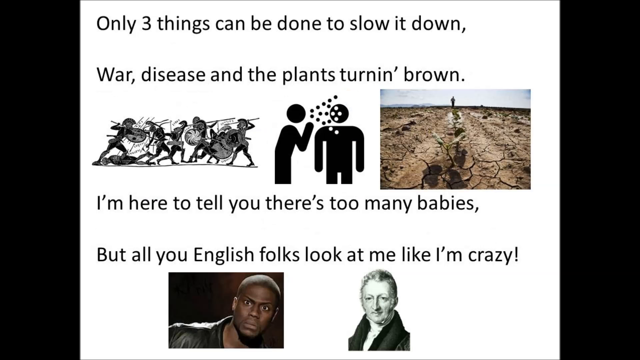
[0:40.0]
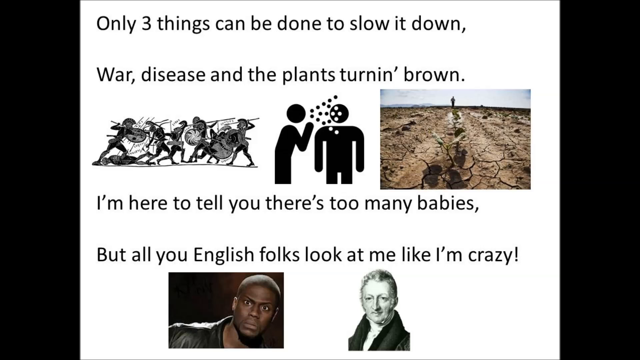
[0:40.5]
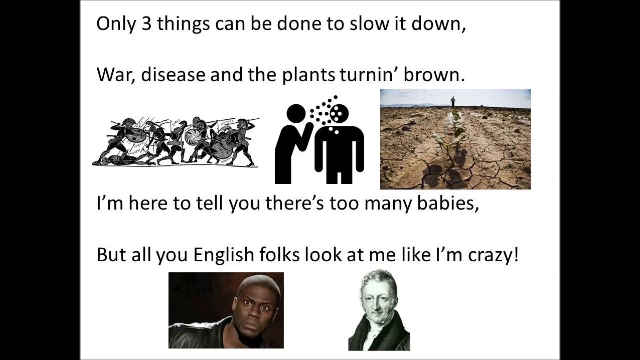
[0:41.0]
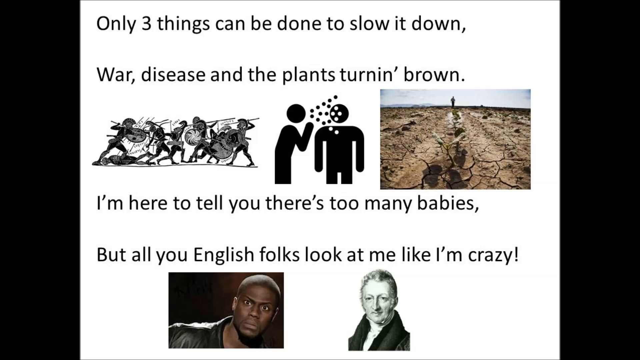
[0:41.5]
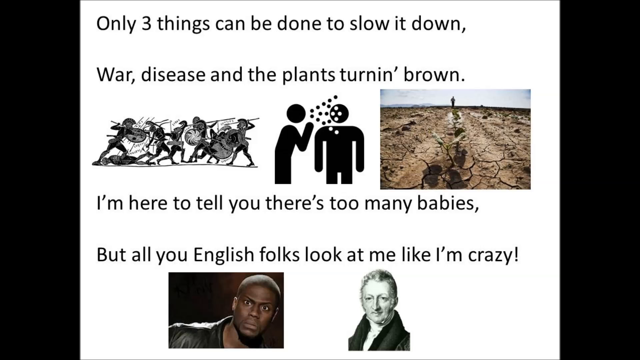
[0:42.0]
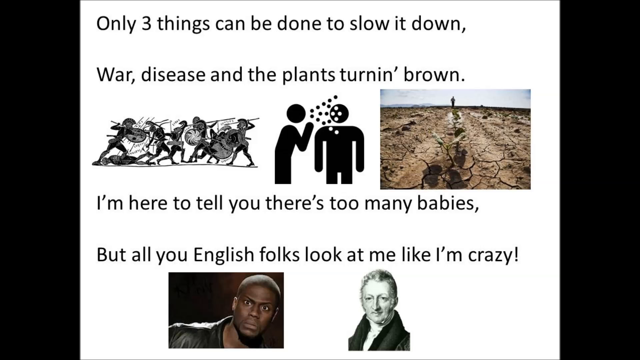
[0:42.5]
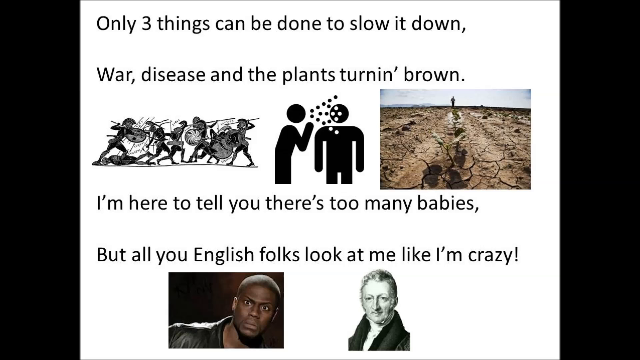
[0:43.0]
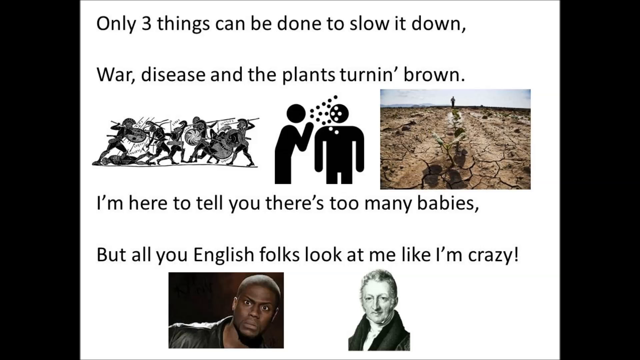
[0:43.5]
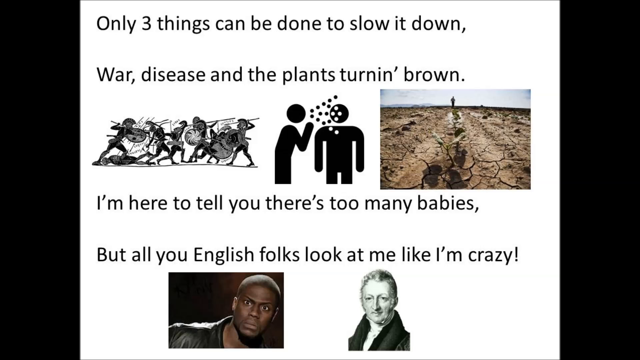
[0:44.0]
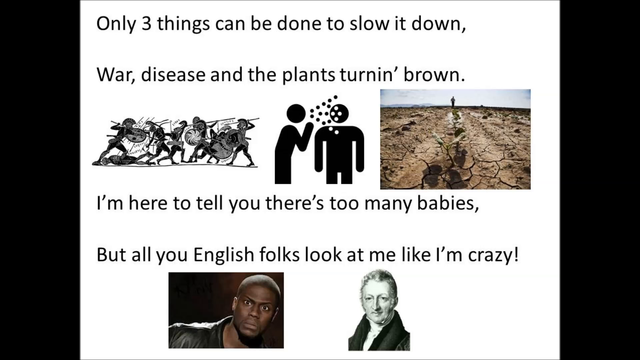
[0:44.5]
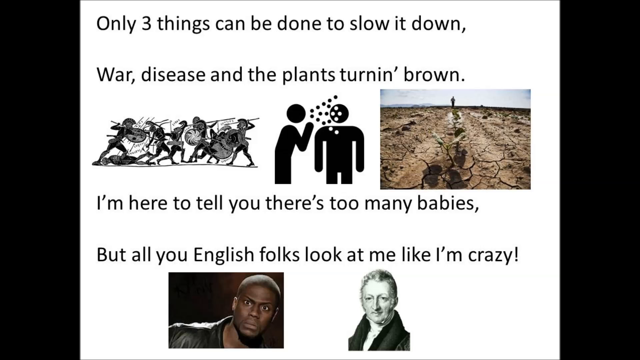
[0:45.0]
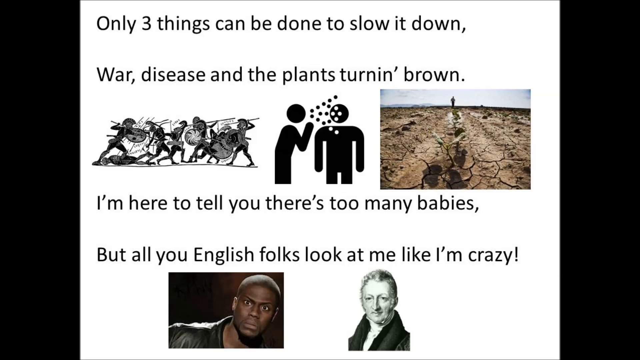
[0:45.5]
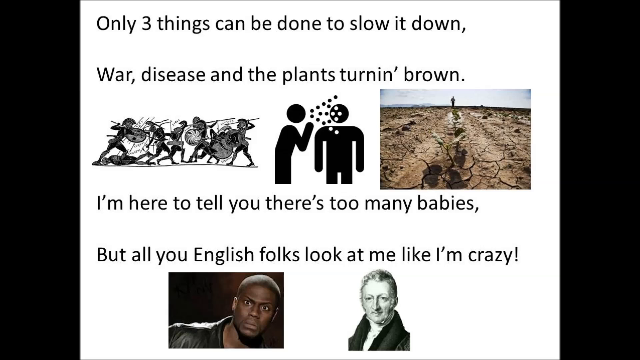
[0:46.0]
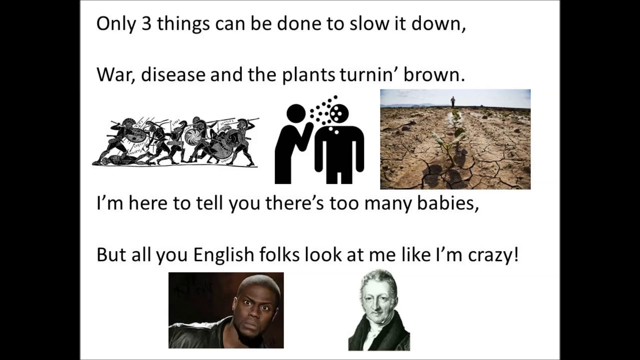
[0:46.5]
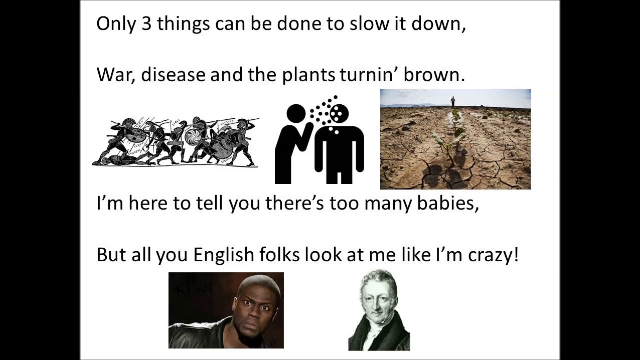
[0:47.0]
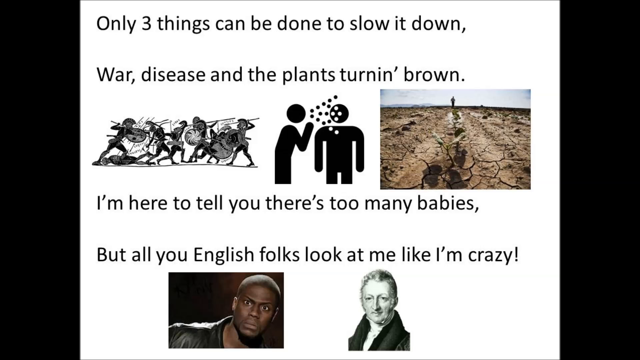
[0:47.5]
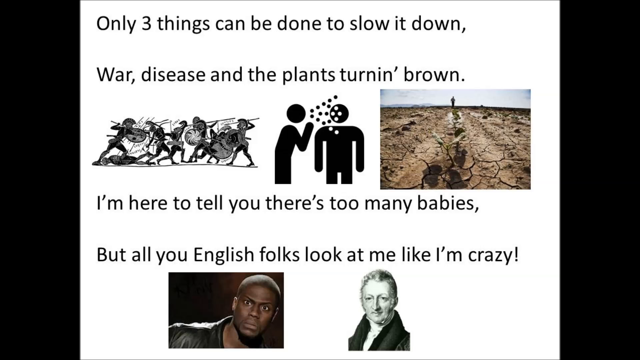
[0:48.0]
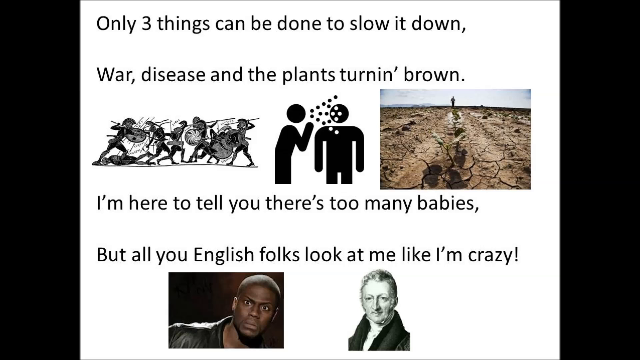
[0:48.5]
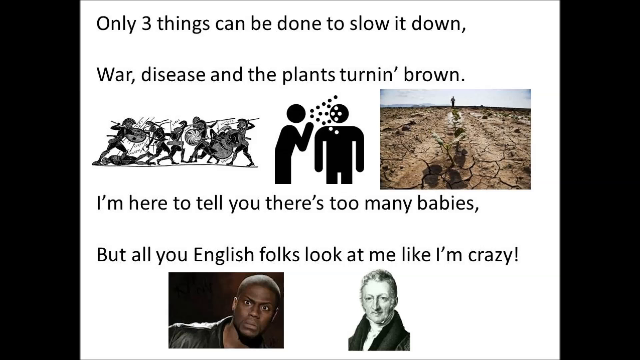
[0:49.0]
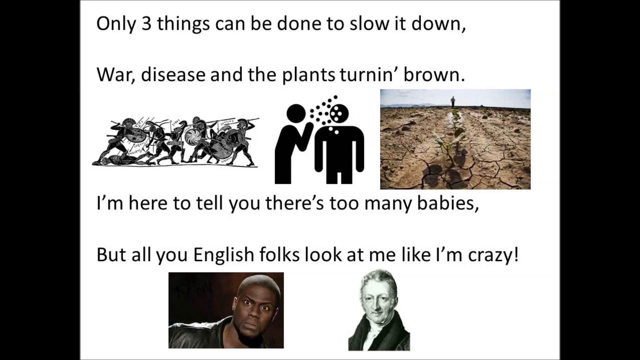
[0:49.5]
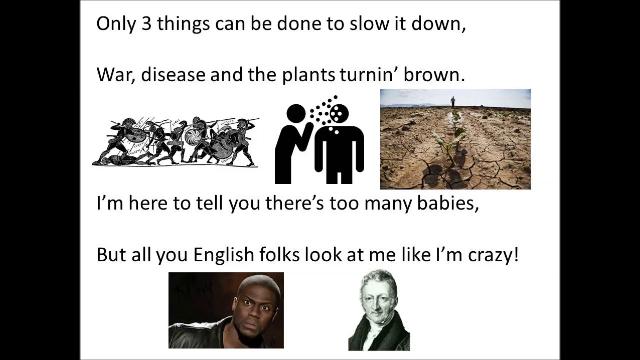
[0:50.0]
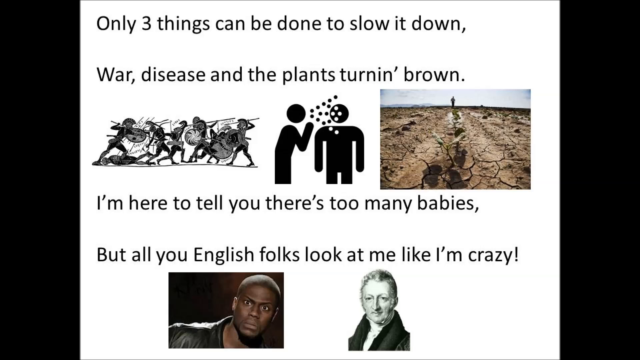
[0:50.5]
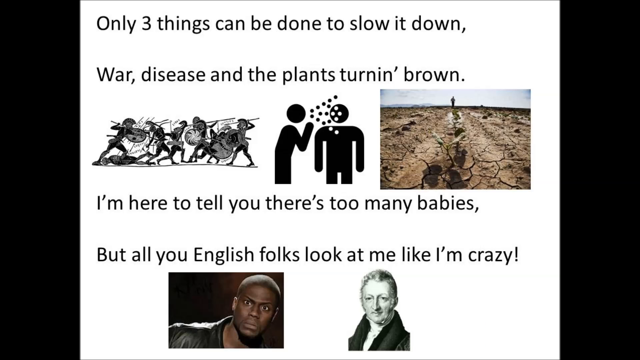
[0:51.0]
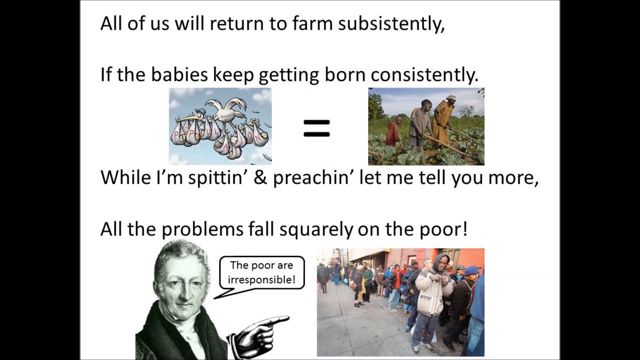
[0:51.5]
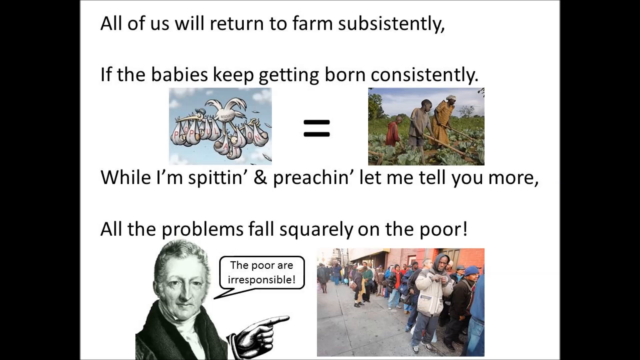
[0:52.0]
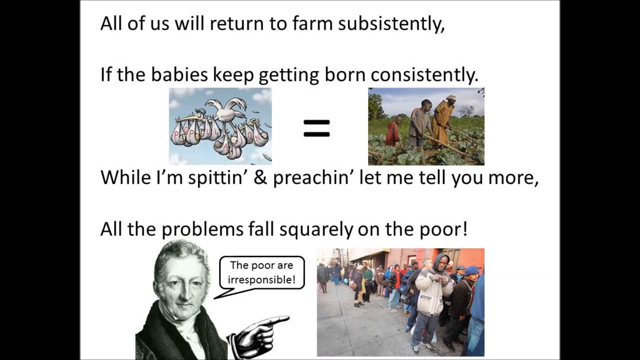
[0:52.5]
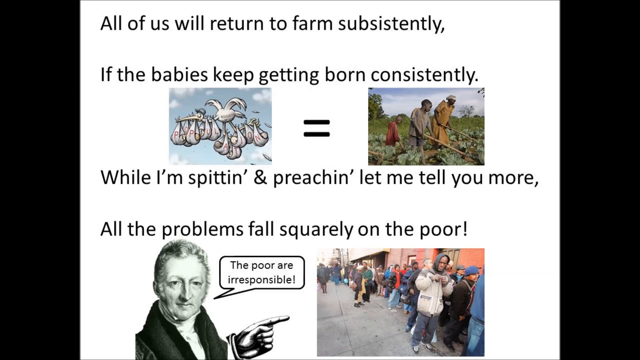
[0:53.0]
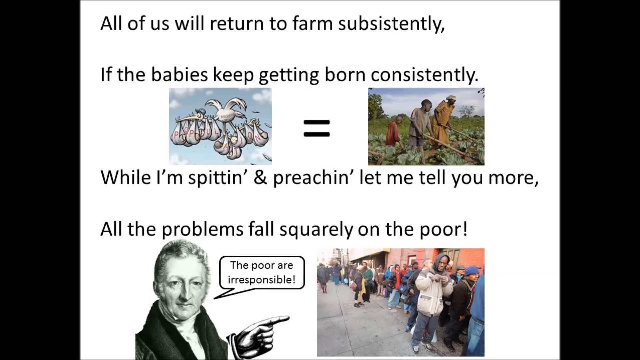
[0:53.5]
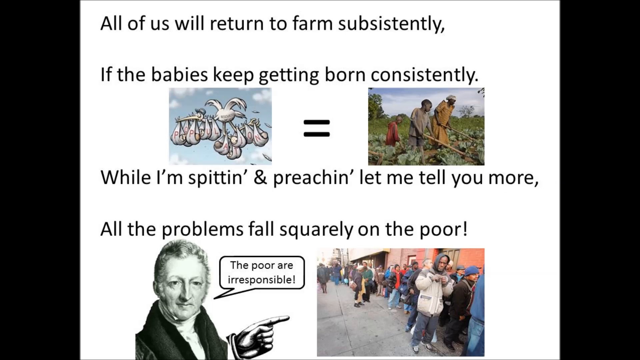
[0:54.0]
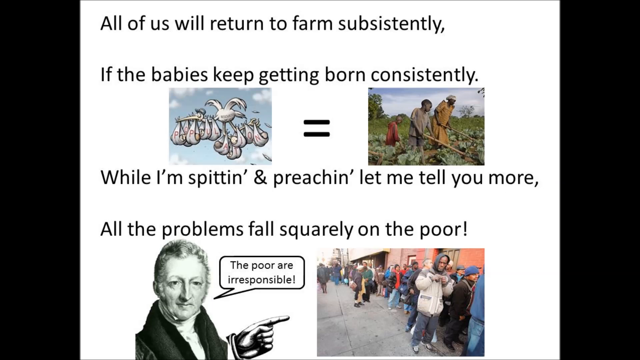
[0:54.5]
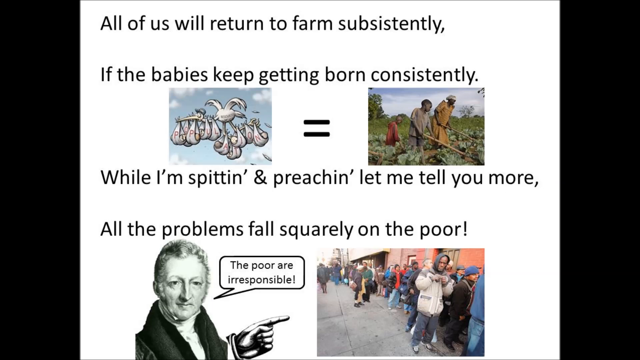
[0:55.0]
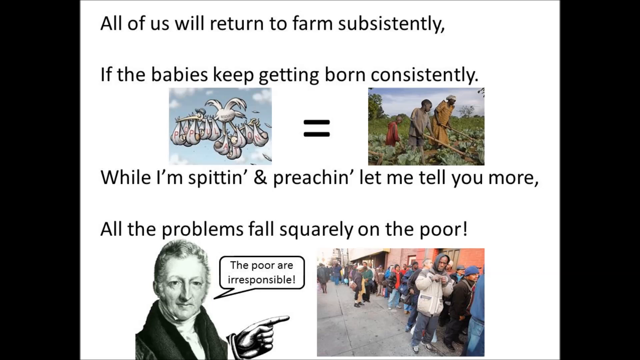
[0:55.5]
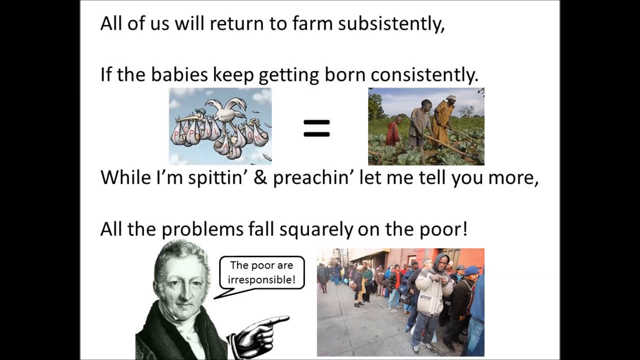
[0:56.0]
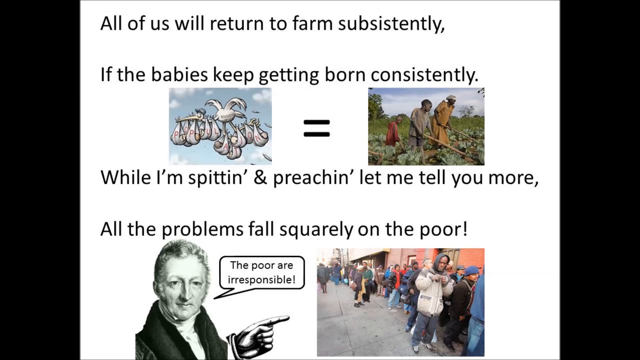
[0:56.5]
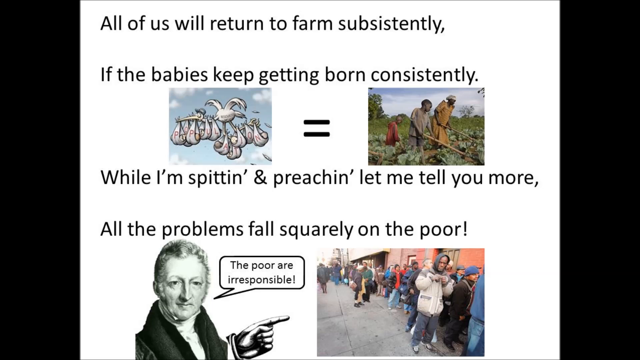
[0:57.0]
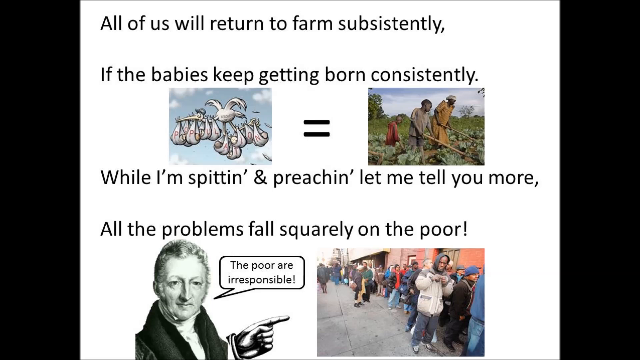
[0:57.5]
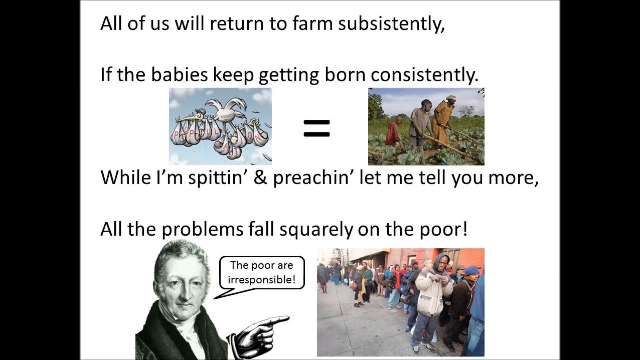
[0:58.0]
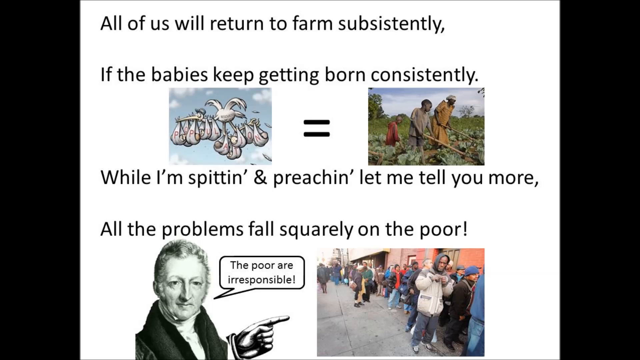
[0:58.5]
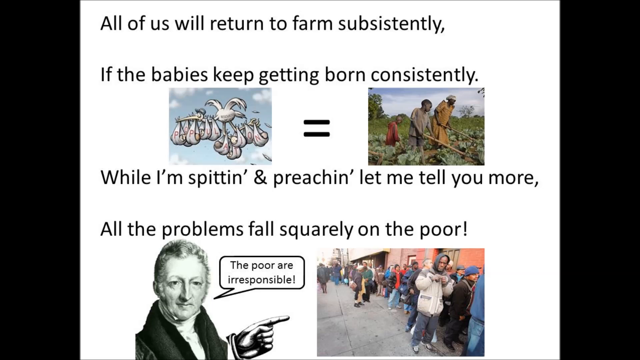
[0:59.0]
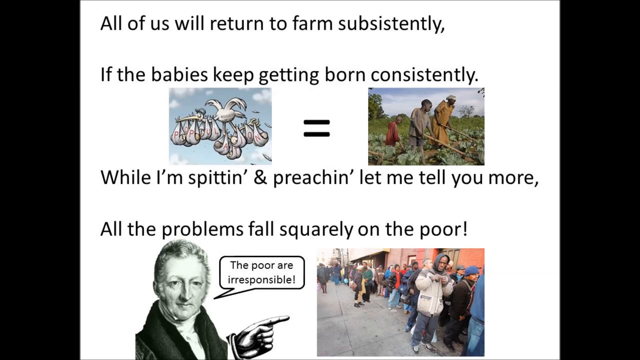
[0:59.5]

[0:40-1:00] The segment begins with the words "only three things can be done to slow it down," written in black. Underneath are the words "war" and "disease" and plants turning brown. Below this, on the left middle side of the screen, is a black-and-white drawing of people who appear to be in active physical combat. In the middle of the screen is a drawing of two black stick figures: one faces the screen, and the other, turned toward the right side of the screen, is to the left of the one looking straight ahead. Next to this is an area of land that appears drought-stricken, with dirt that appears dry, cracked and parched. Underneath is the text "I'm here to tell you there's too many babies." Beneath this is a meme of Kevin Hart with a stunned look on his face.